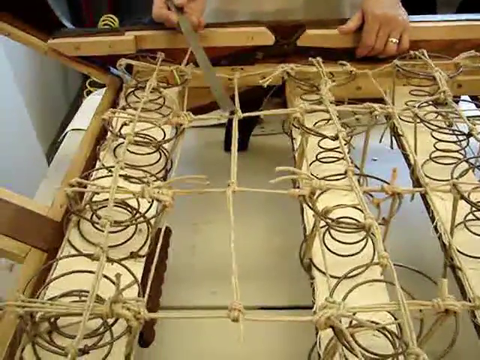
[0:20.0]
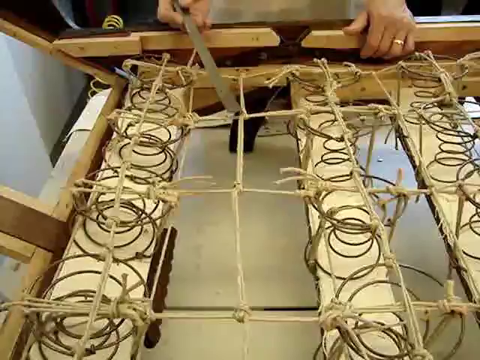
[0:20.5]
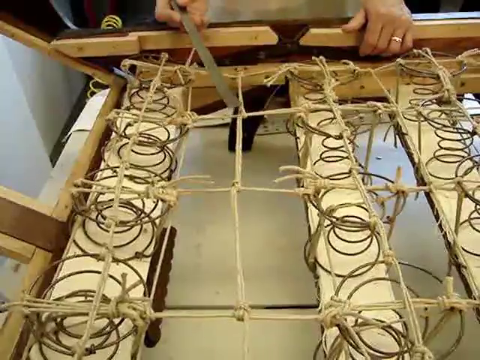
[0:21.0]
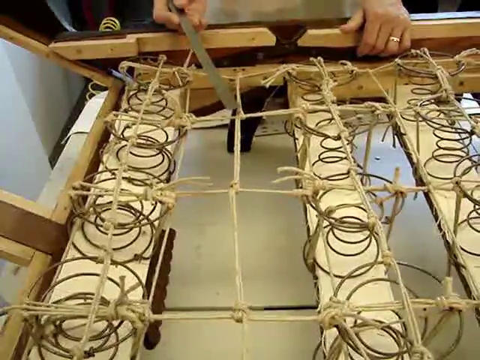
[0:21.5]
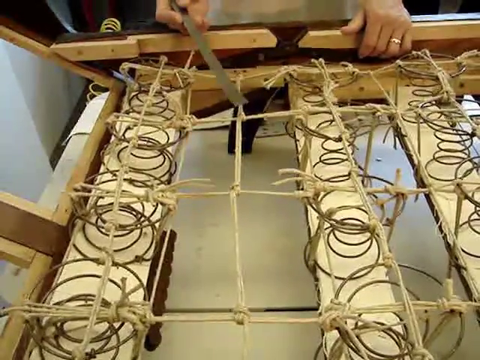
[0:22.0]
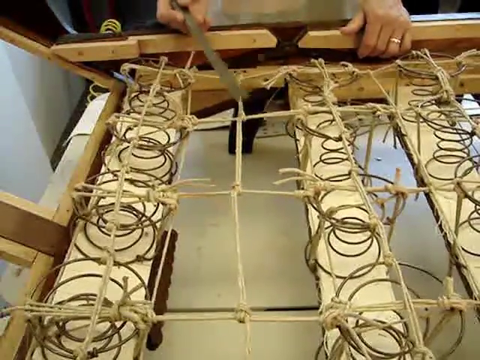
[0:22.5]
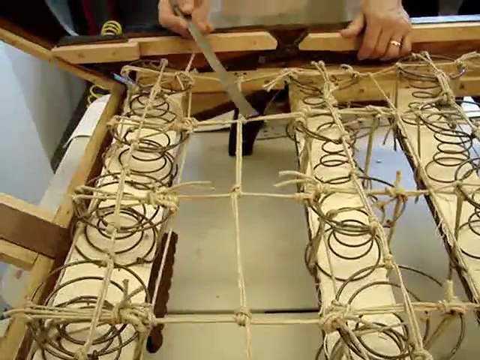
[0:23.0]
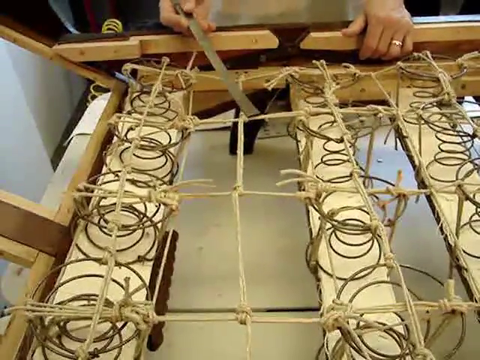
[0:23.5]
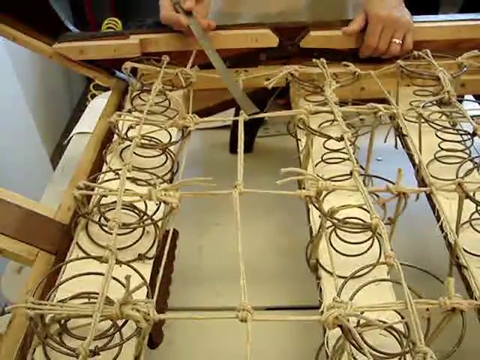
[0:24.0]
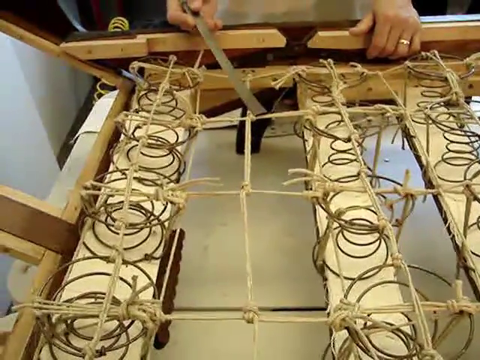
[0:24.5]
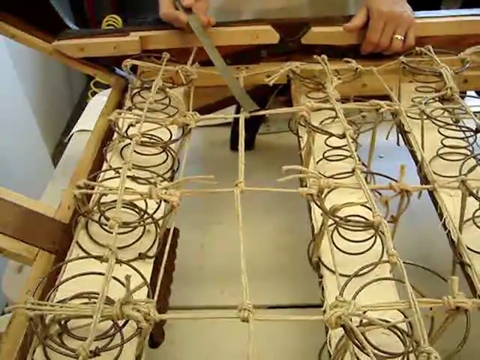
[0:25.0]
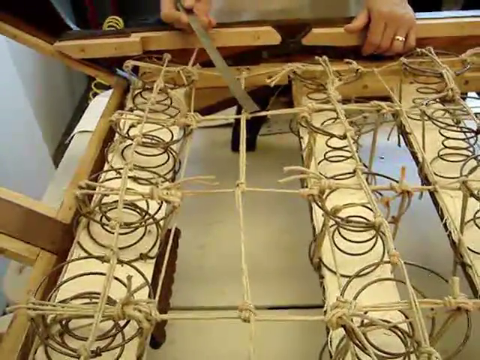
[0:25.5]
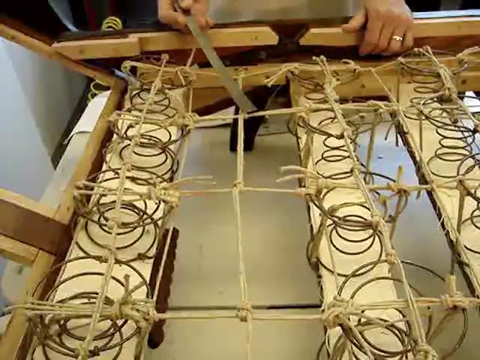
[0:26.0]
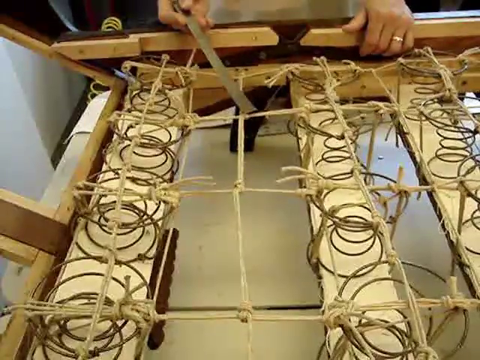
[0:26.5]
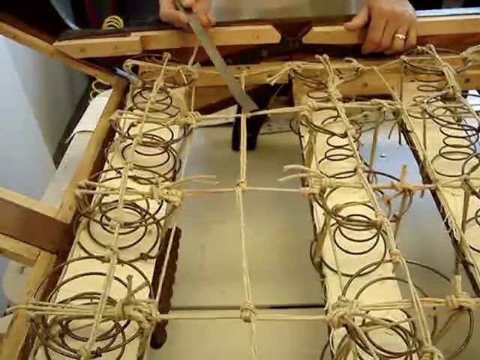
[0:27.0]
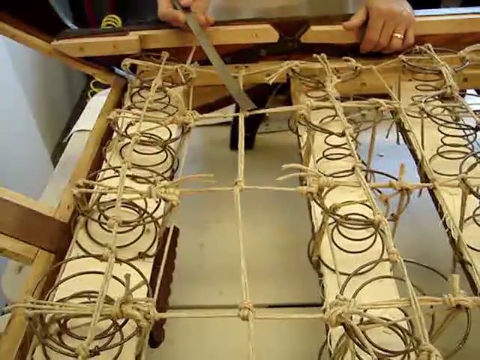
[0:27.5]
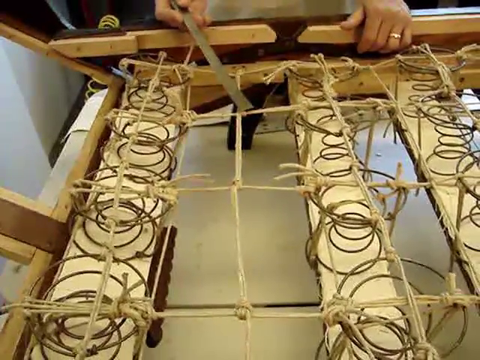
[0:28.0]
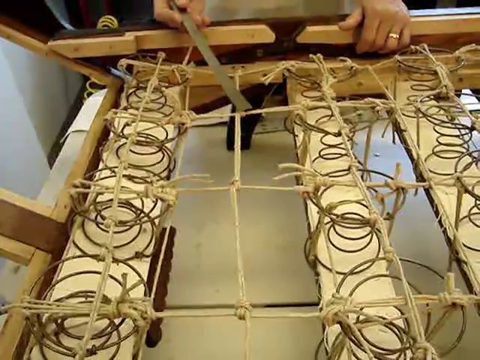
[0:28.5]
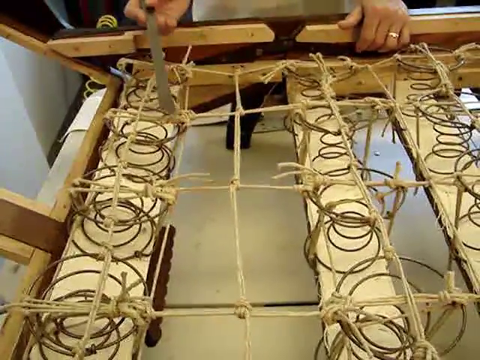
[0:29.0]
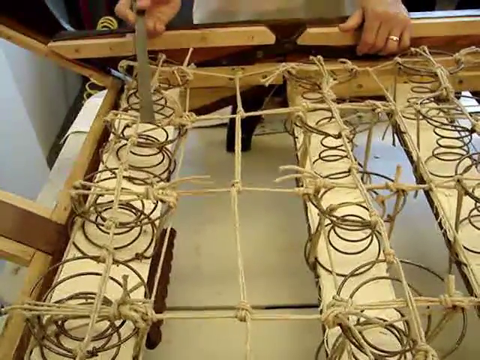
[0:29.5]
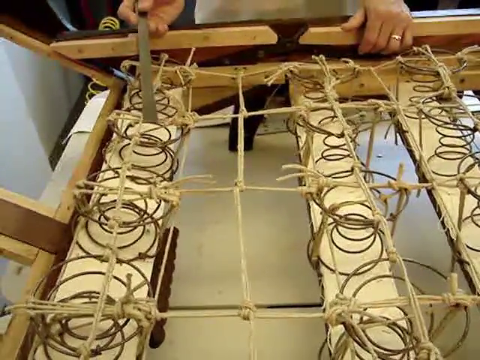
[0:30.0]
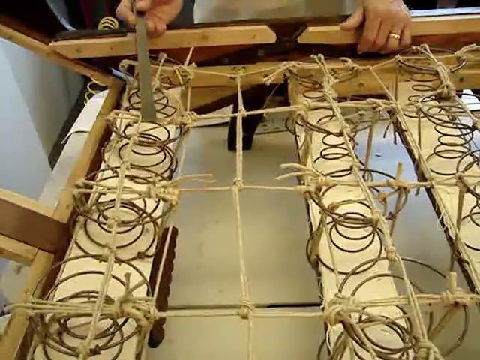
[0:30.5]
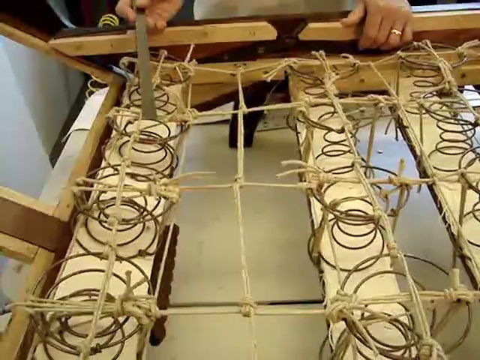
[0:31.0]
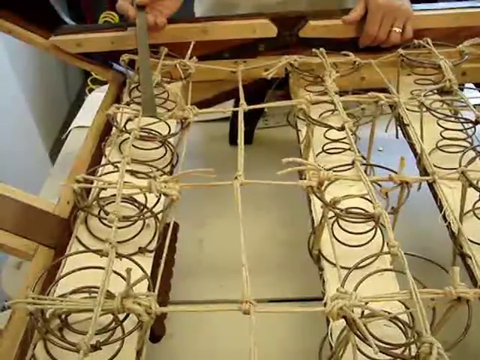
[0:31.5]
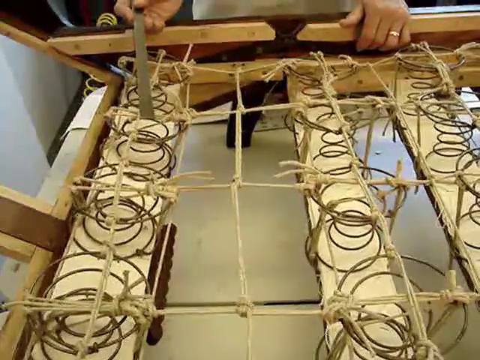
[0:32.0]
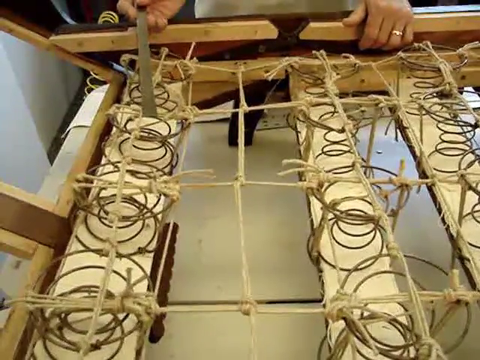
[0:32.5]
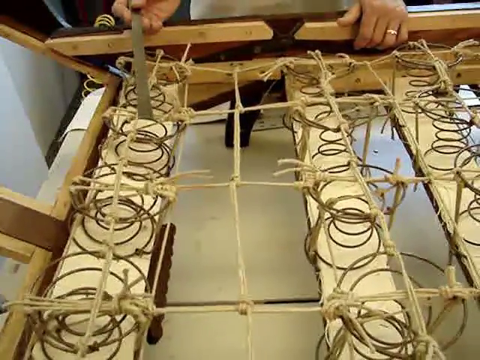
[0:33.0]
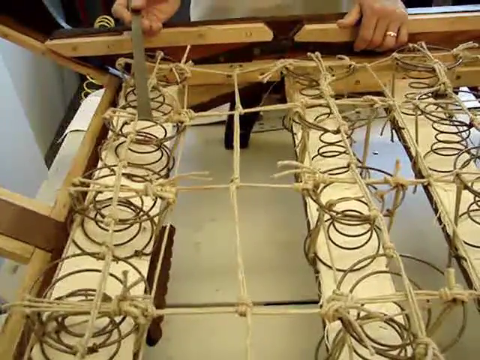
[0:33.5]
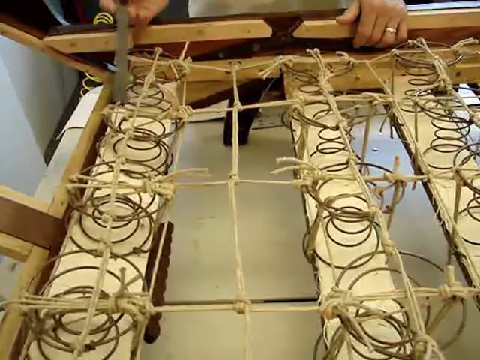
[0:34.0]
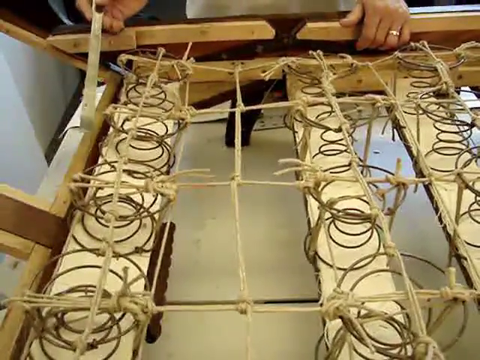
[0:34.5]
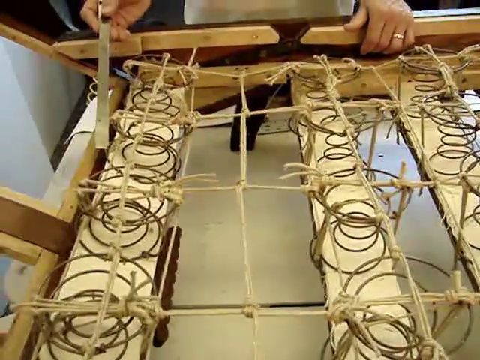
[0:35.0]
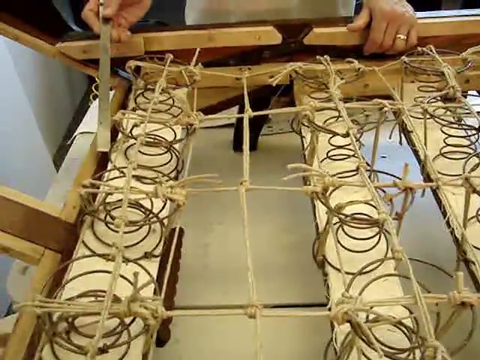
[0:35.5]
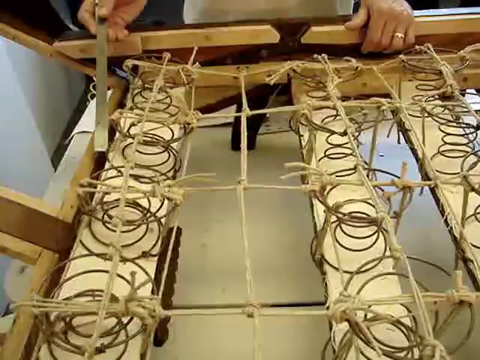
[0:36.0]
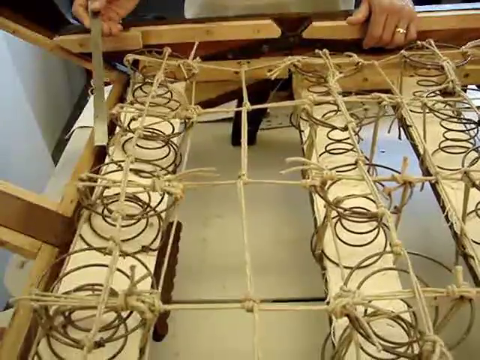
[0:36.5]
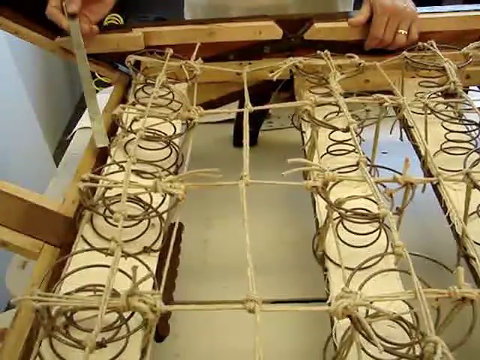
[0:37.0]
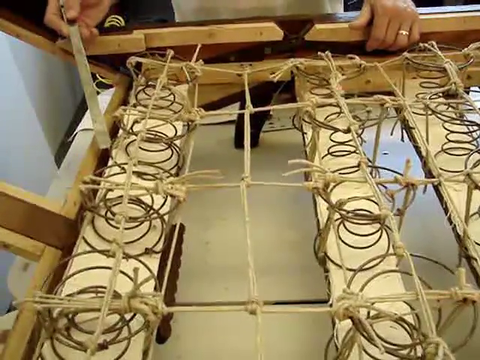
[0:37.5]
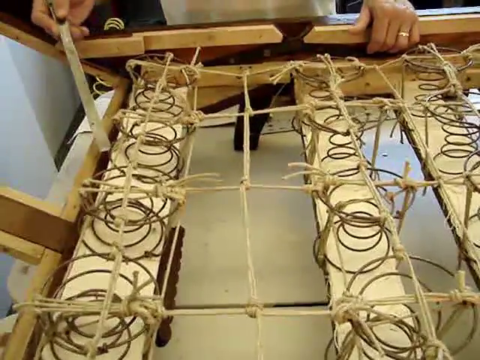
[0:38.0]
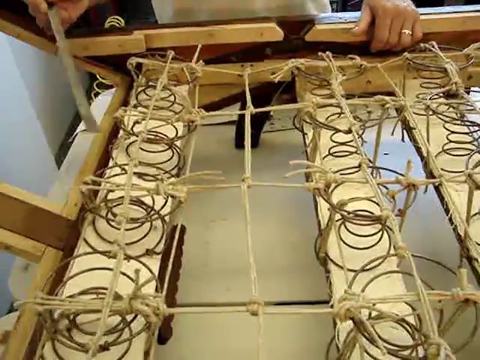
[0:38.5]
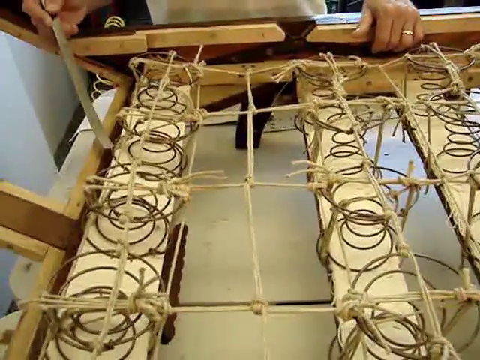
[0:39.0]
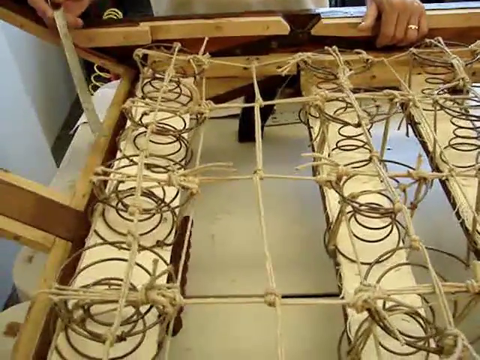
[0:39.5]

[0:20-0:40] The man continues in his workshop, showing the wood and the springs. Wood is underneath, springs are on top of the wood, and tight ropes cross over the springs, with everything tied up. It looks like a bed that he is trying to make, and it is apparently a big project.